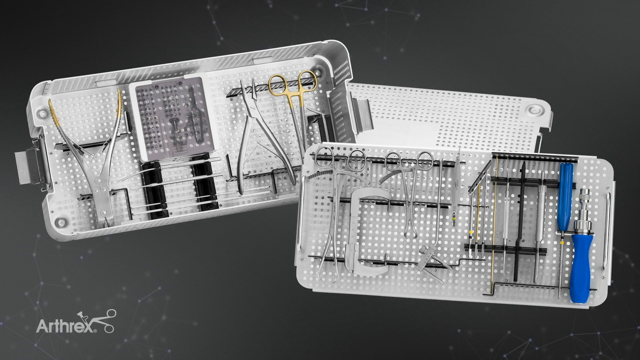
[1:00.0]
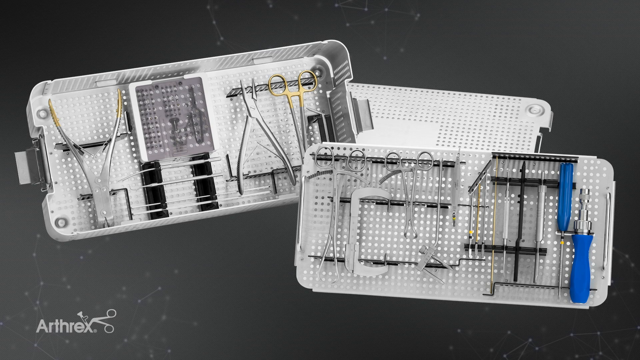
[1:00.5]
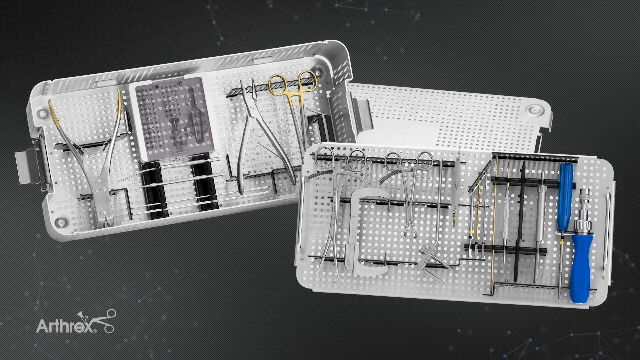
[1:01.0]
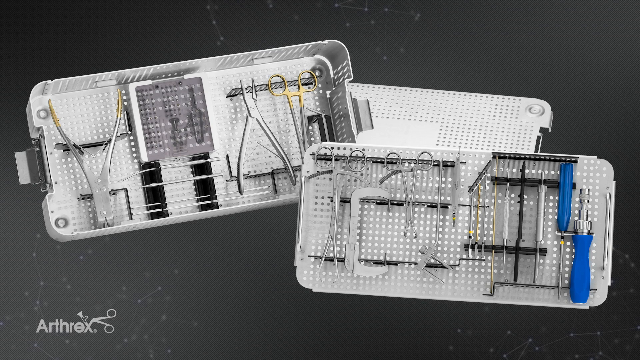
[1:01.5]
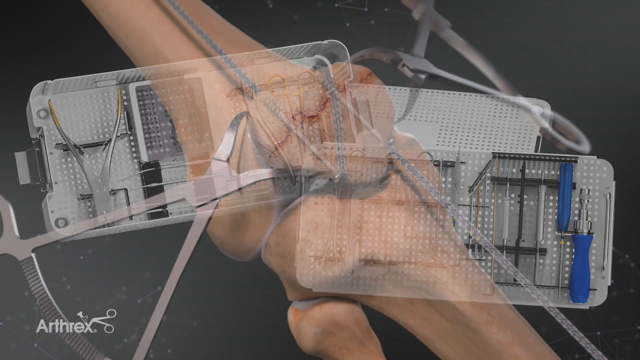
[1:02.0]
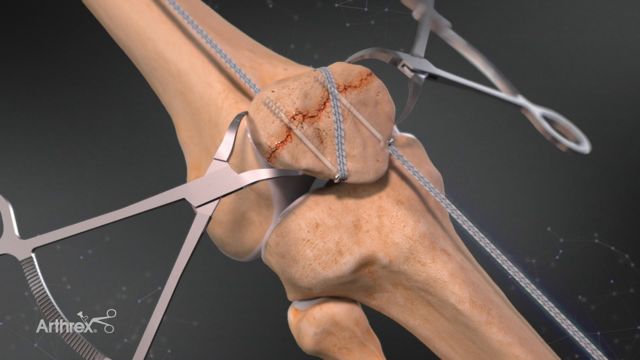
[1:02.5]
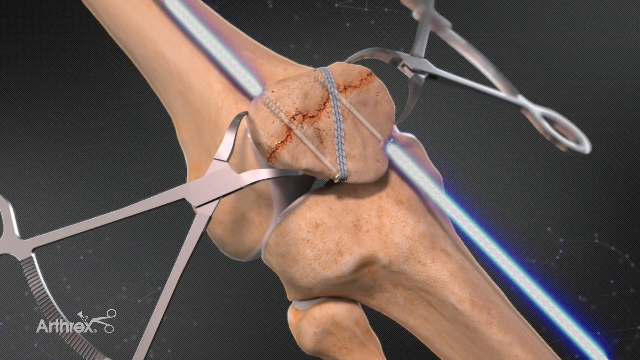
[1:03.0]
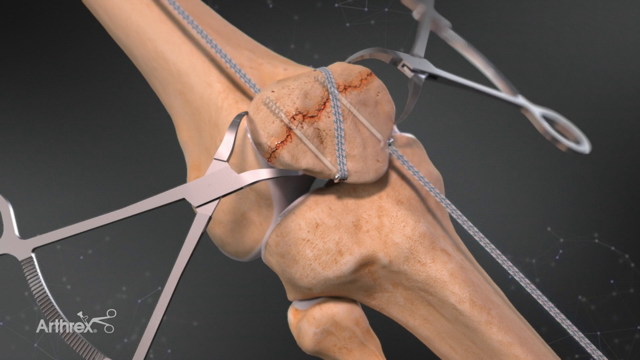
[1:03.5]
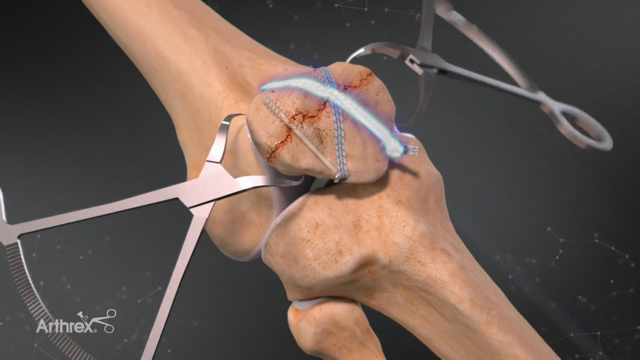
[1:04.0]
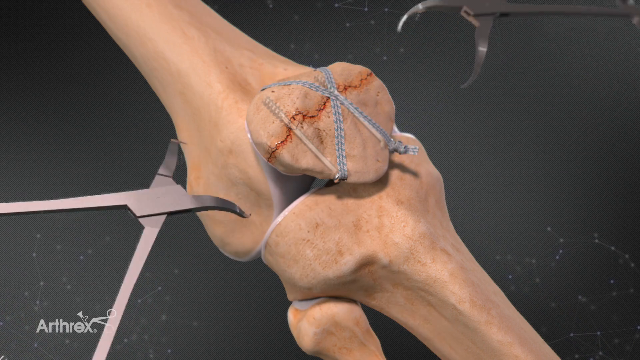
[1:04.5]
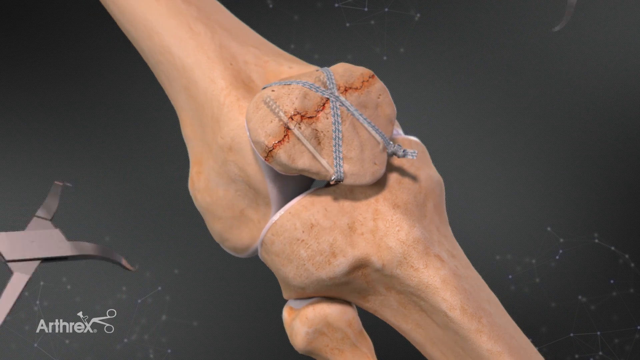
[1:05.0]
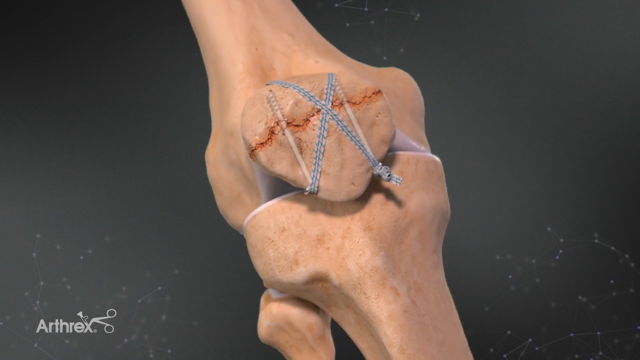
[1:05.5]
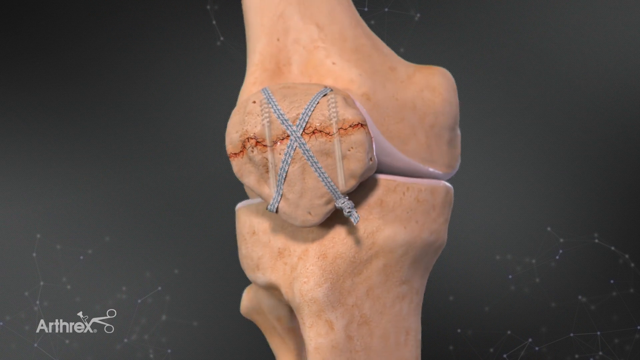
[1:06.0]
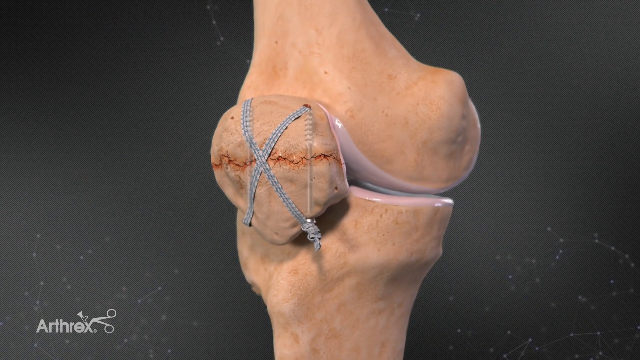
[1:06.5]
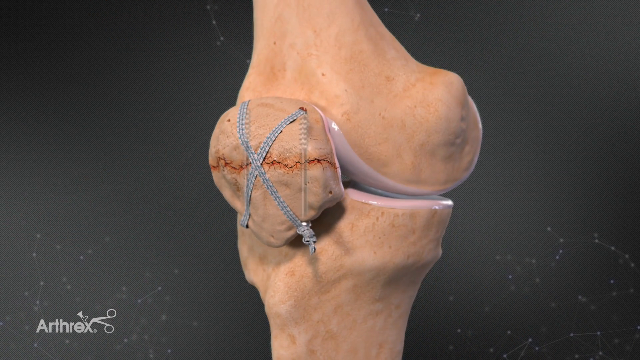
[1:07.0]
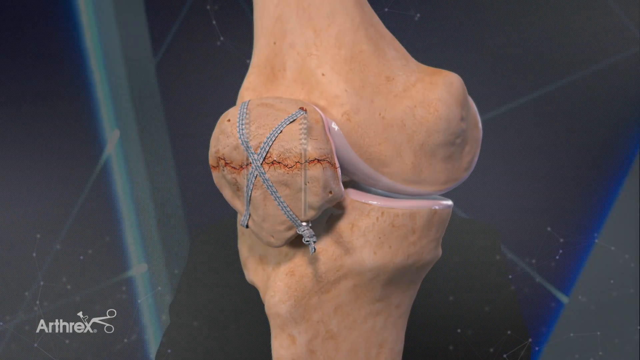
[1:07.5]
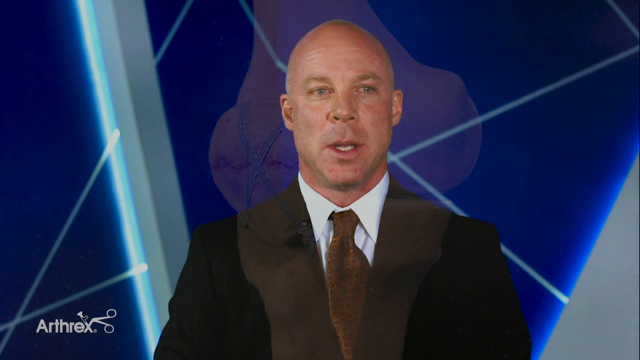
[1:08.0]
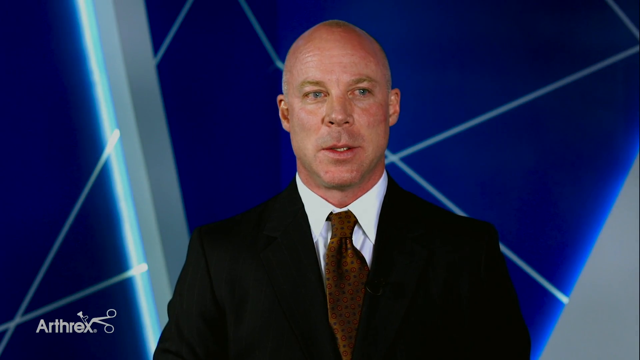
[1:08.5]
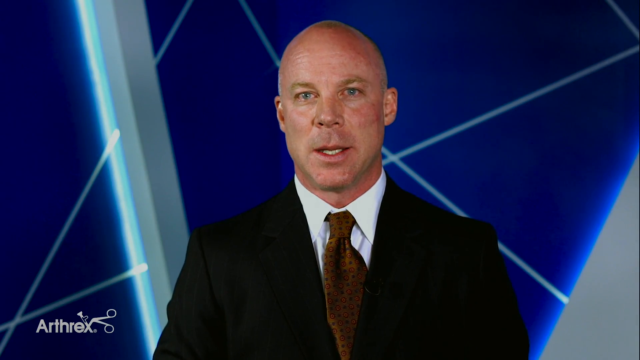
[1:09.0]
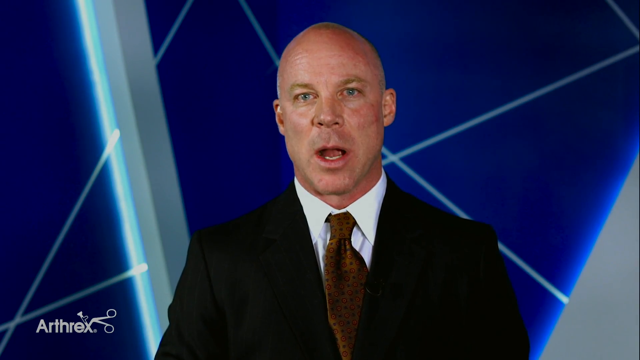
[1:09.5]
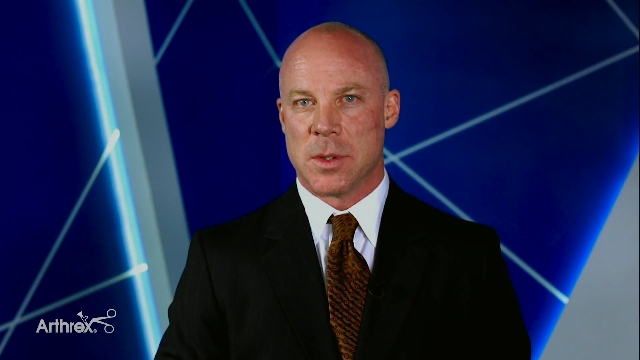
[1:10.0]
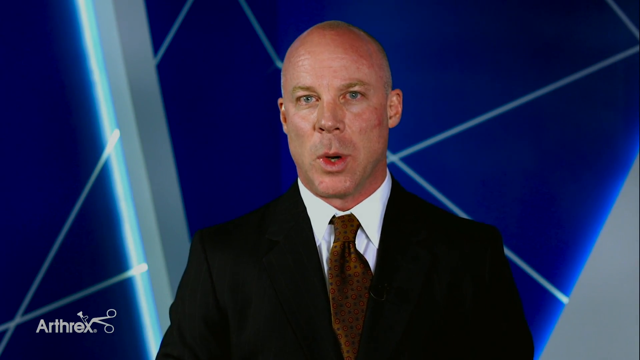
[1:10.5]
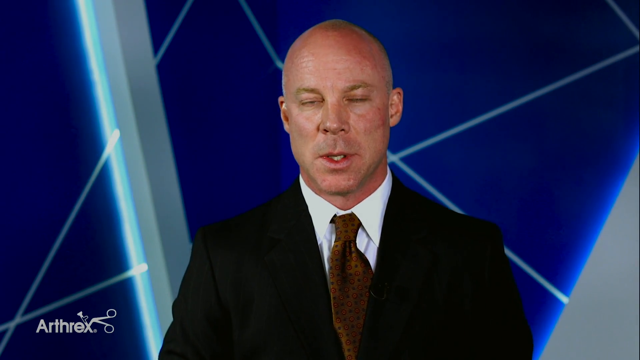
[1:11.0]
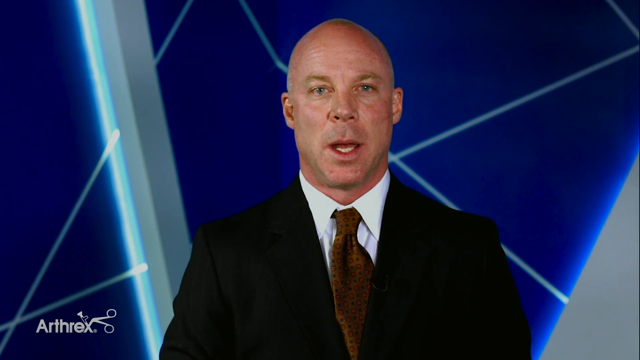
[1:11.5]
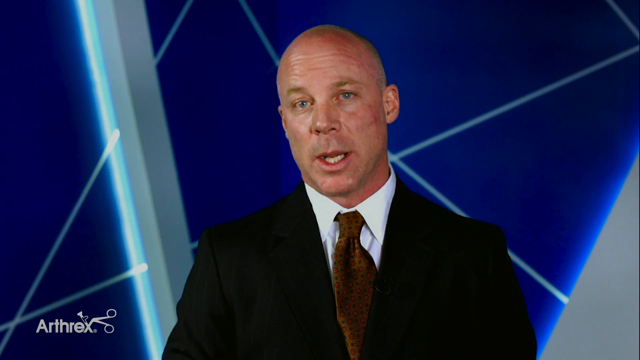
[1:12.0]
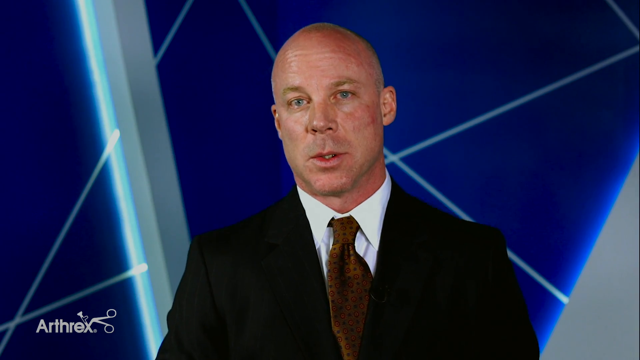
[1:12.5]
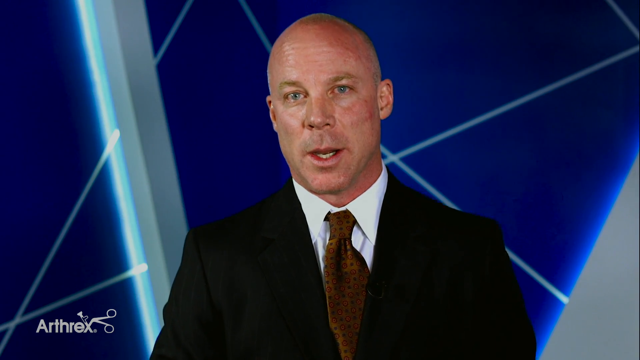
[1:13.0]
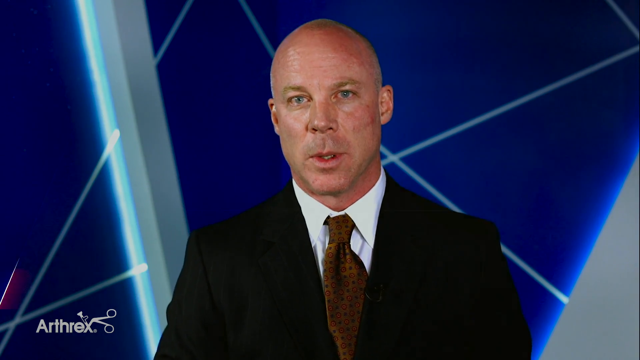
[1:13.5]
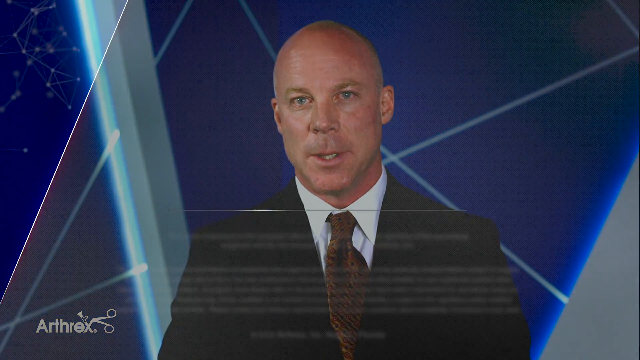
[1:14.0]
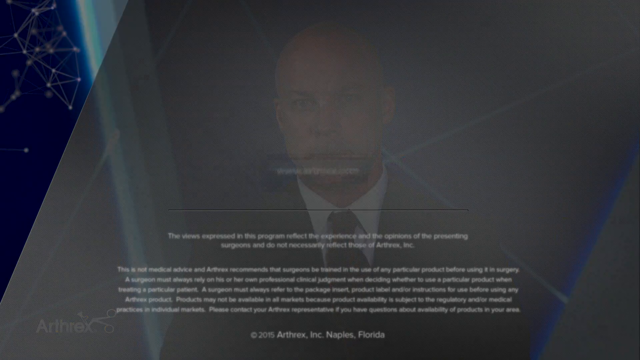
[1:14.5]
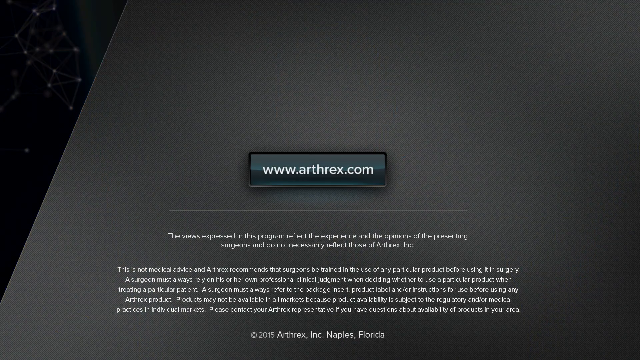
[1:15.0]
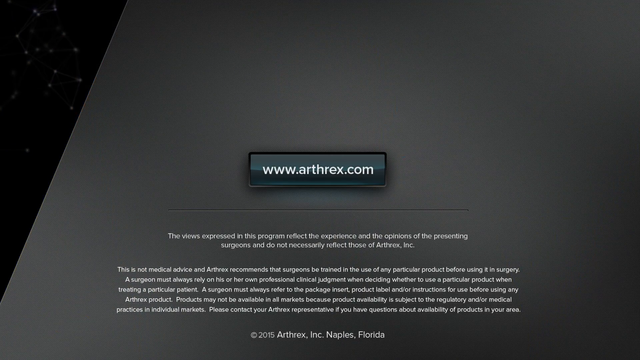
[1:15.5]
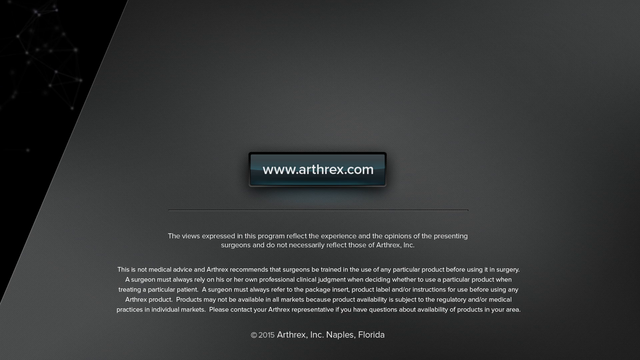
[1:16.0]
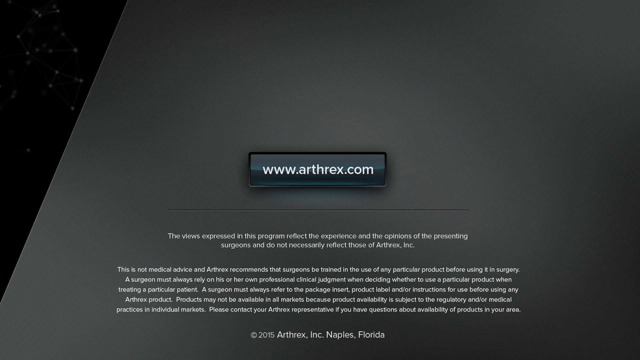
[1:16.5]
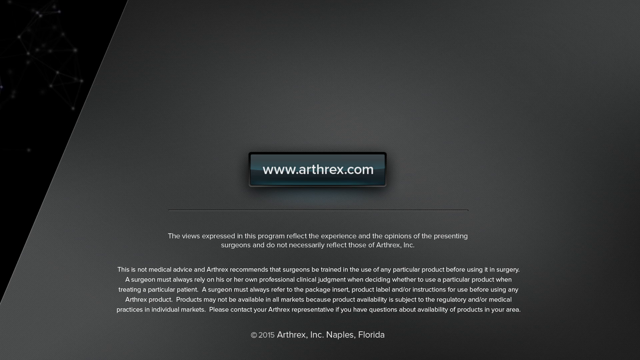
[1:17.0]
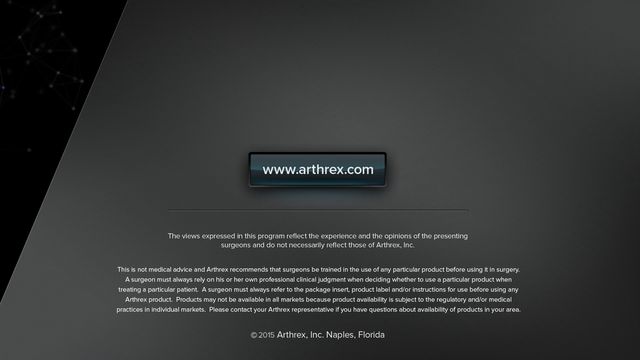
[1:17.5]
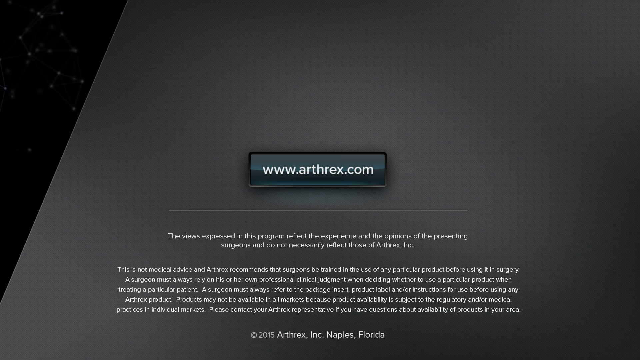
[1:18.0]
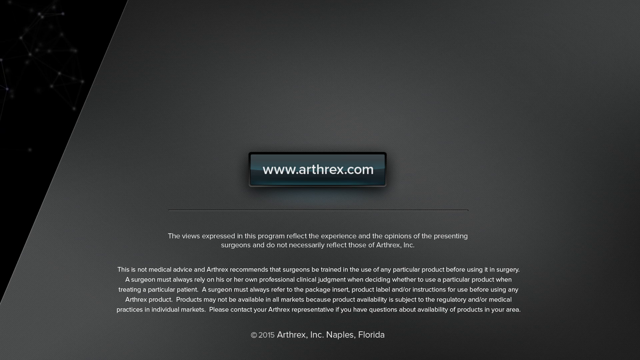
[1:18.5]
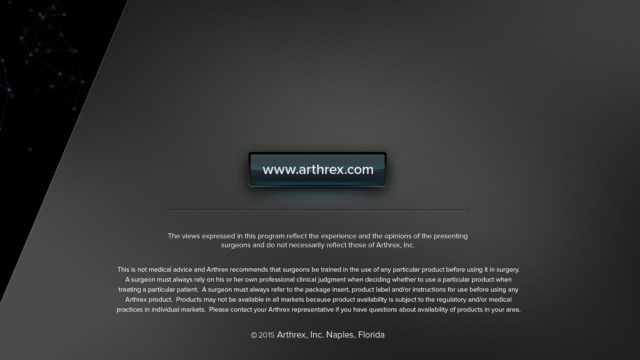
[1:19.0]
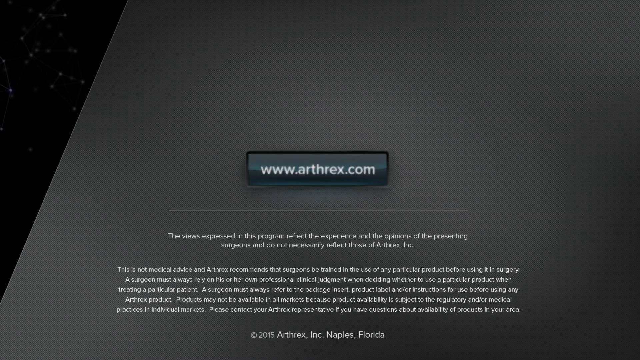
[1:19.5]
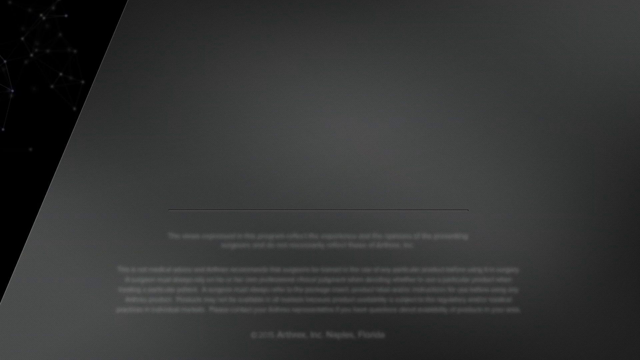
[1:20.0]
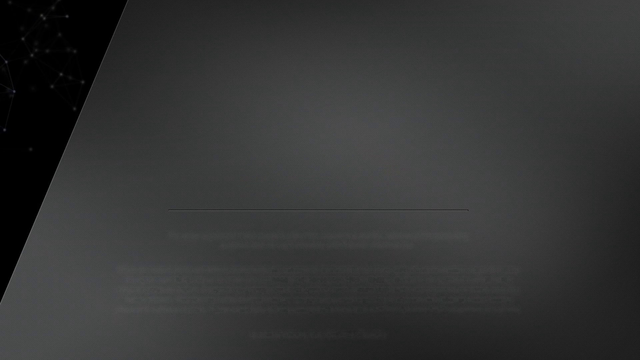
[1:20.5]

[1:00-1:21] Two boxes of medical supplies are shown, with little circular holes as part of their design. Behind them is a white plate that may be the lid of the boxes. The scene transitions to what looks like a 3D model of a bone, apparently the kneecap or patella, with two leg bones behind it. Big metal clippers hold onto the patella, which has a scar down the middle. Strings are being attached to the patella, tying it up, with blue strings going across it. Next, a bald man in a black suit, white shirt and brownish tie talks toward the camera. He is in a 3D-looking environment or artificial background that is blue, with white lines going across it and gray, shining pillars. The final shot shows a button reading "www.arthrex.com" with white fine print below it on a gray background.